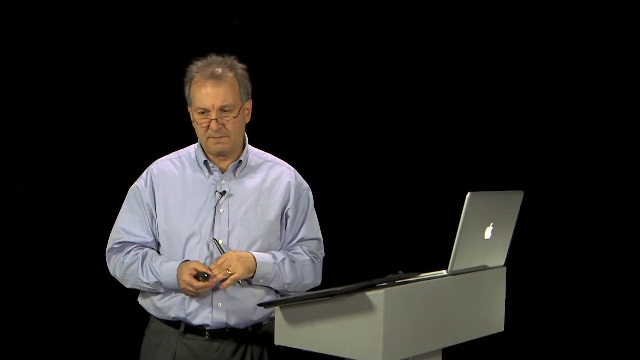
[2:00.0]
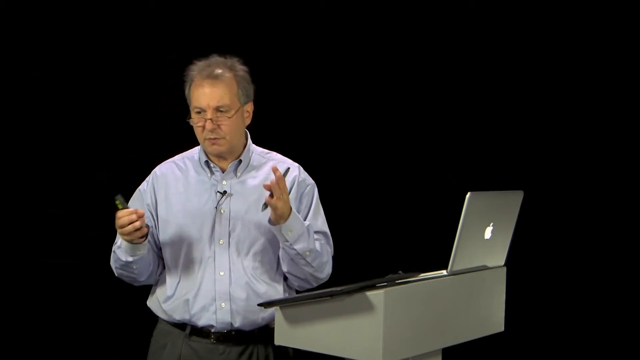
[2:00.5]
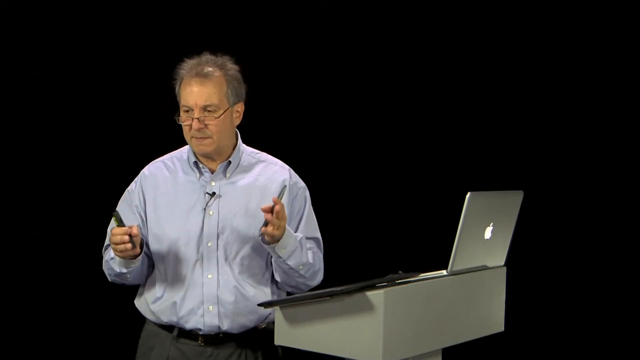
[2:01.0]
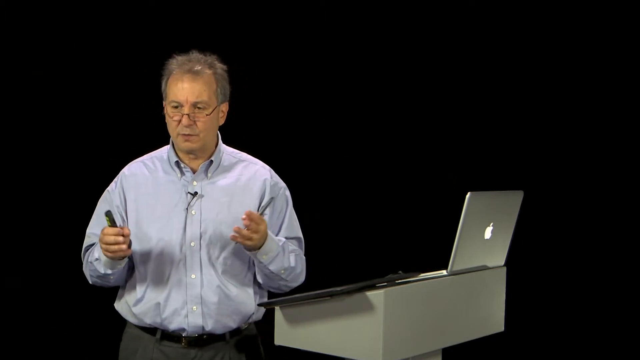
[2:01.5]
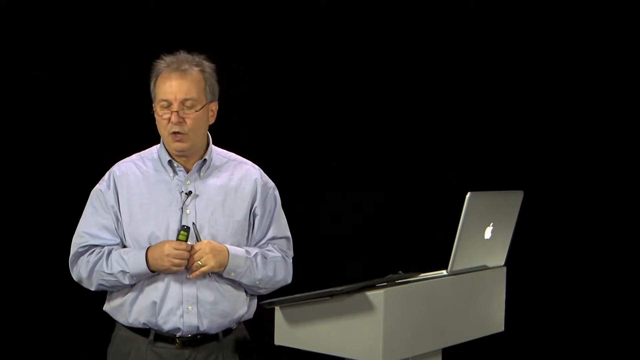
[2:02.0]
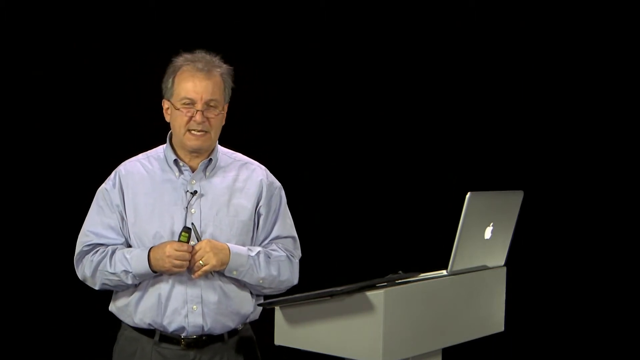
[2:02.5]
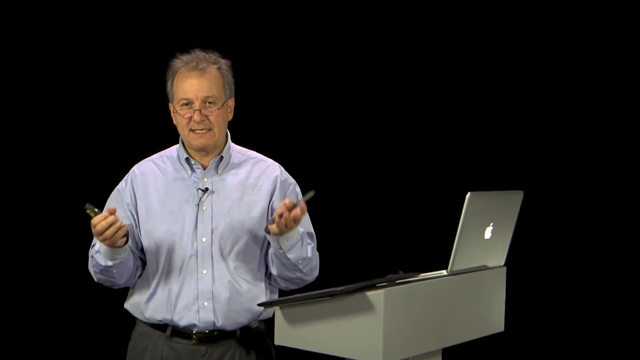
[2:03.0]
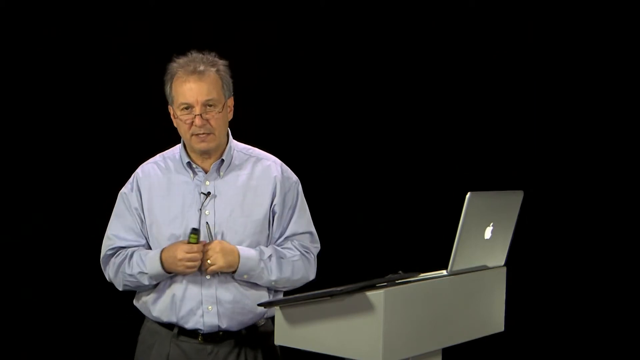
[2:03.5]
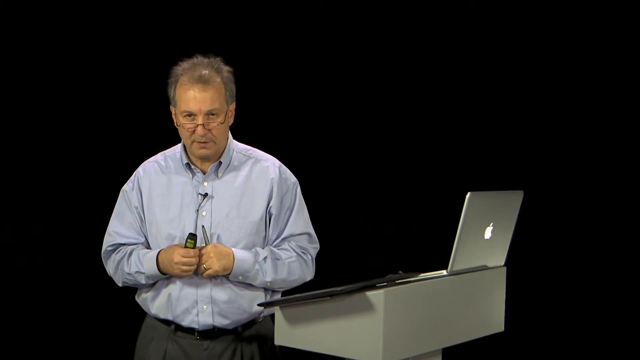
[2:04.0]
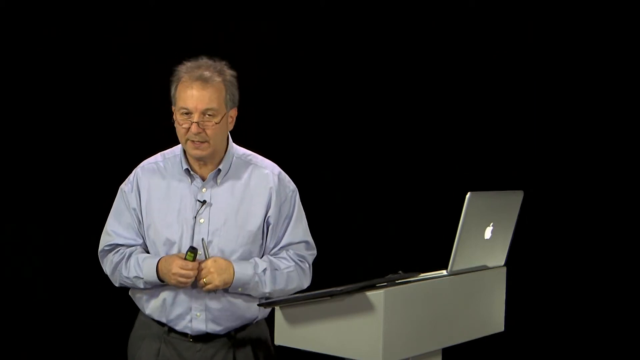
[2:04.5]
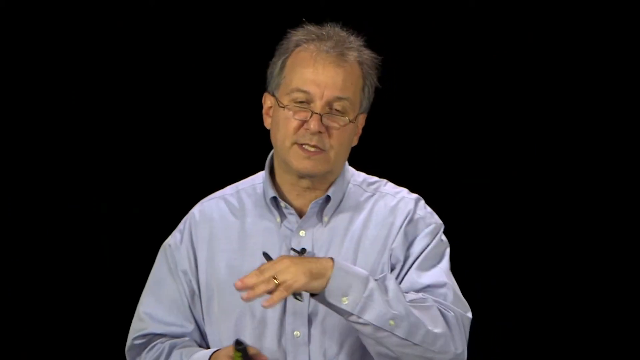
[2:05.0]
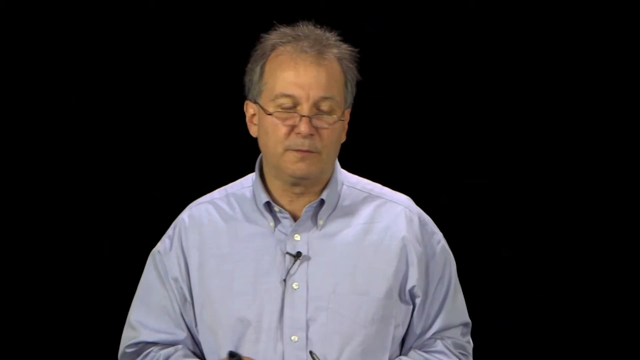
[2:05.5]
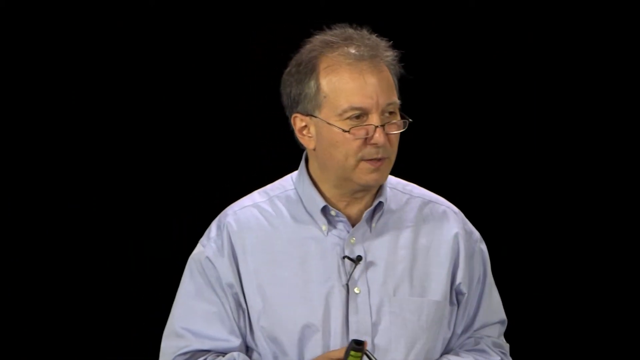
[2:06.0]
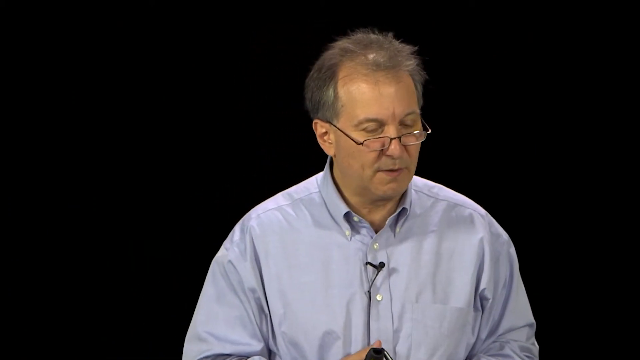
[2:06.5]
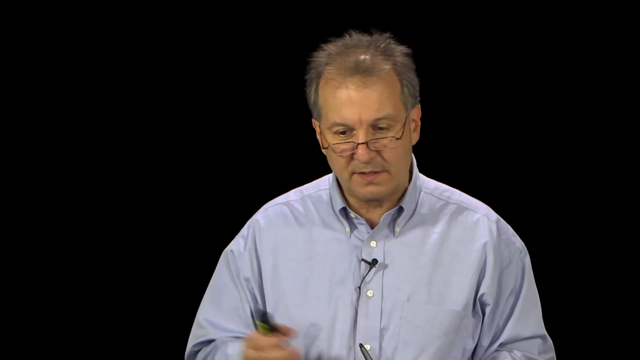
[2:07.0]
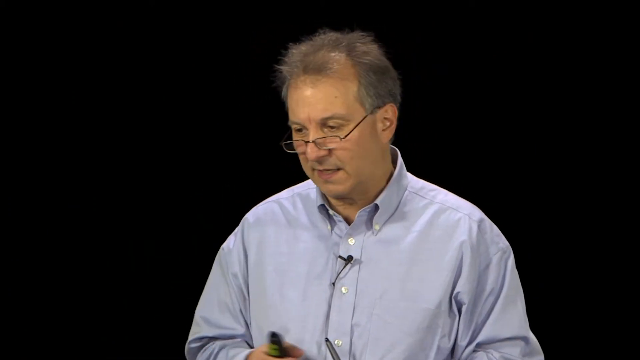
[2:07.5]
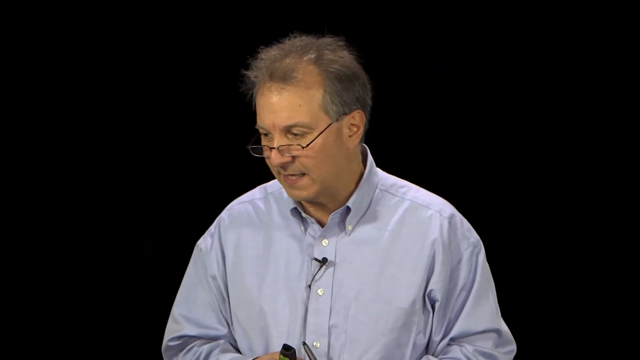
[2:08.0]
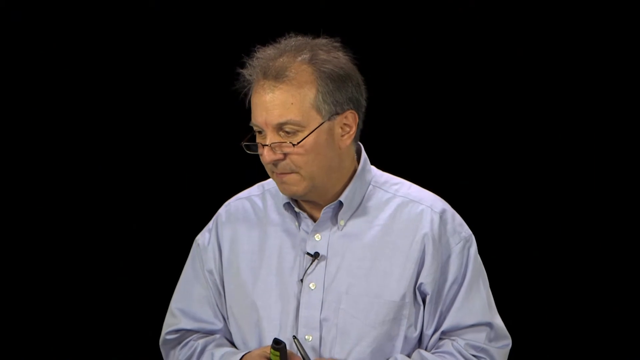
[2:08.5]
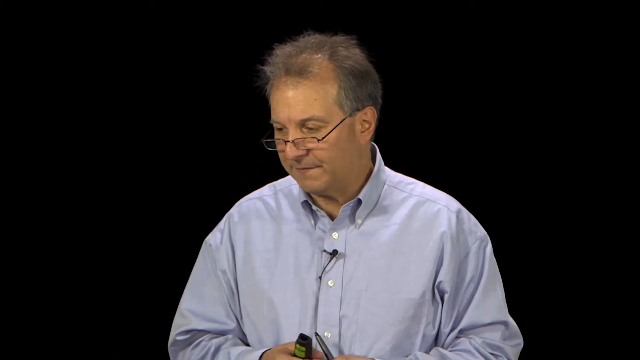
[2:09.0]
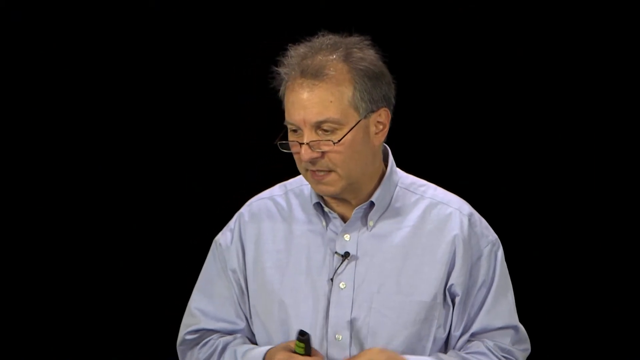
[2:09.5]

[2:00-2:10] The man, wearing glasses and a light blue polo shirt, talks directly to the audience. A computer on the screen is right next to him, and the background is black.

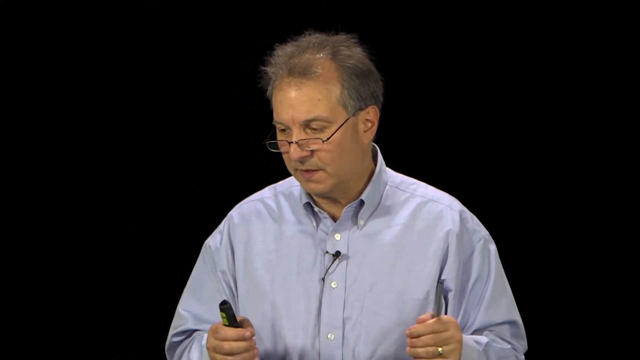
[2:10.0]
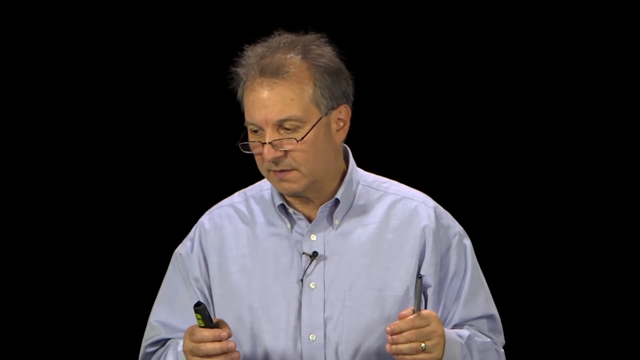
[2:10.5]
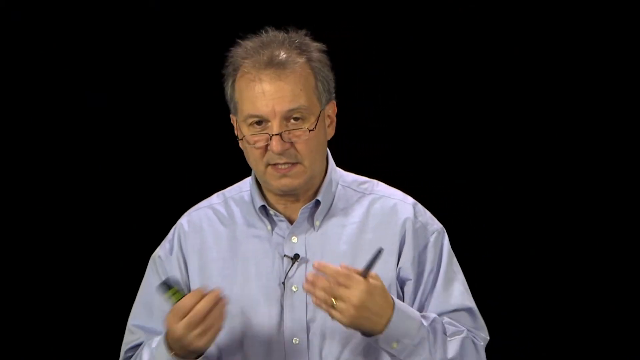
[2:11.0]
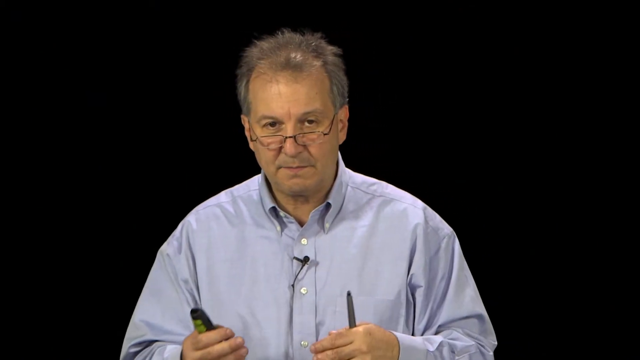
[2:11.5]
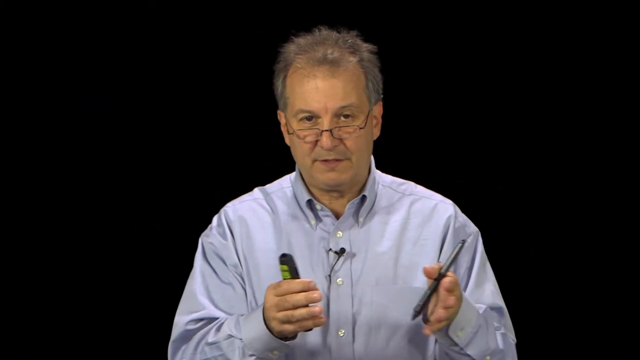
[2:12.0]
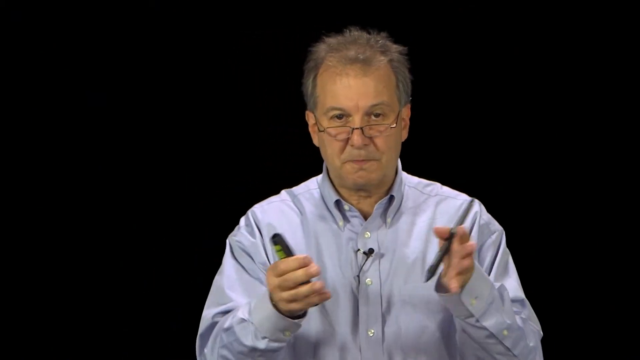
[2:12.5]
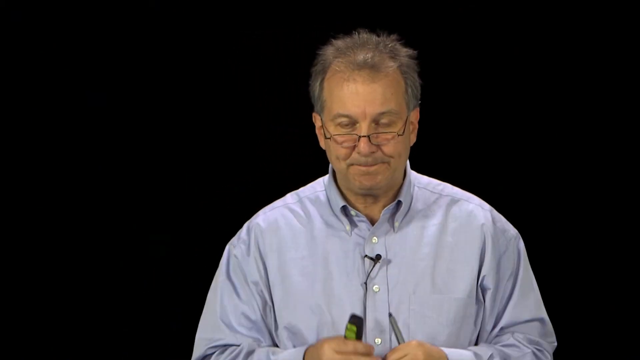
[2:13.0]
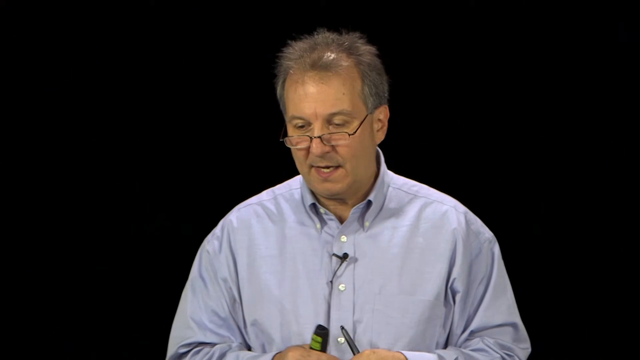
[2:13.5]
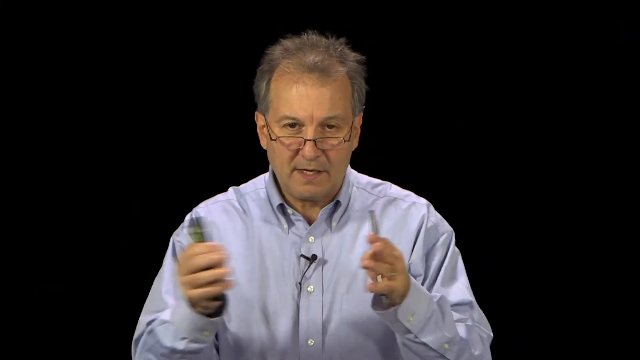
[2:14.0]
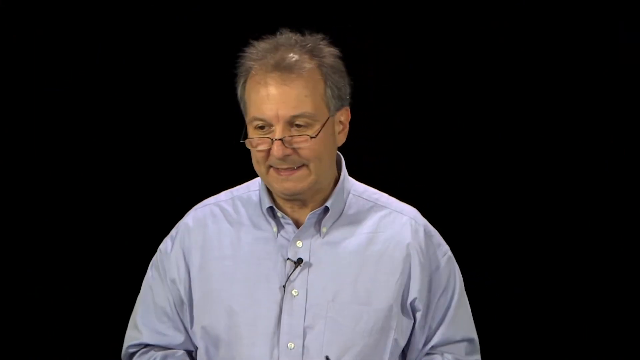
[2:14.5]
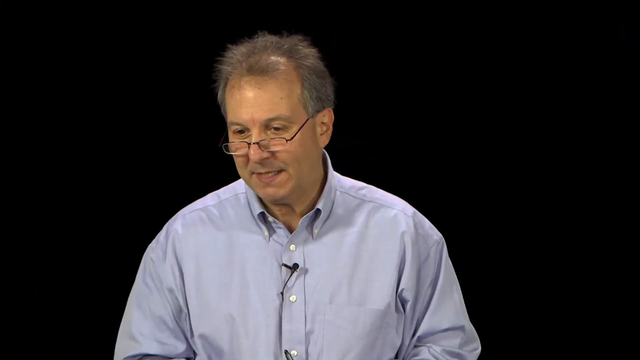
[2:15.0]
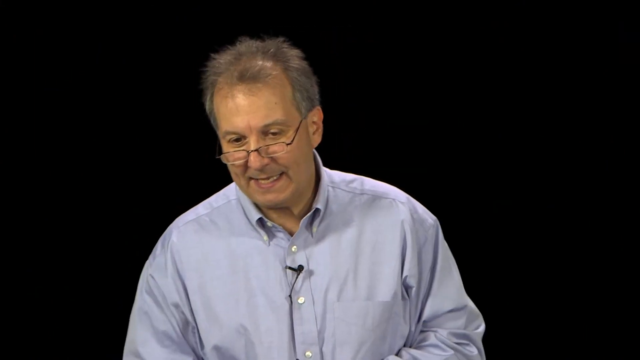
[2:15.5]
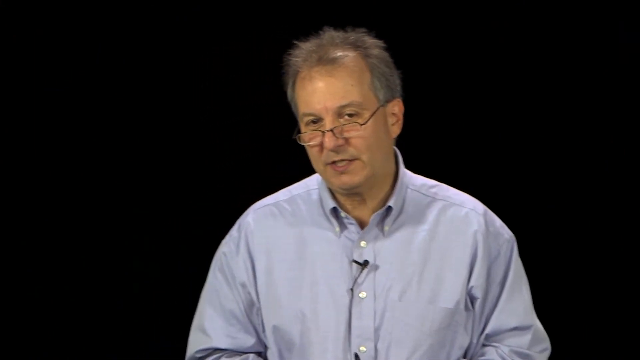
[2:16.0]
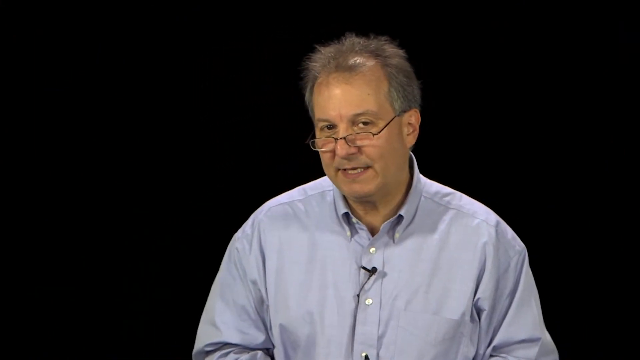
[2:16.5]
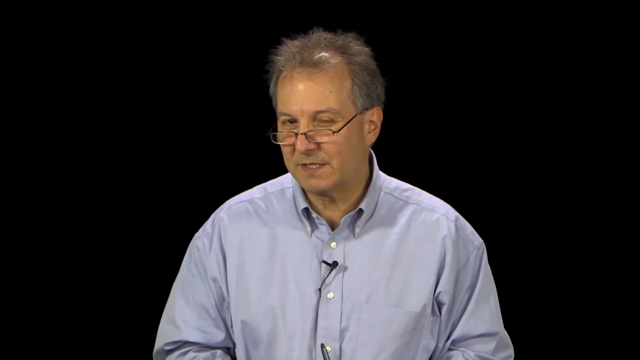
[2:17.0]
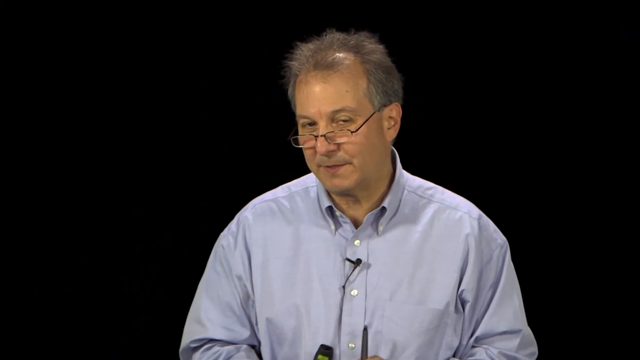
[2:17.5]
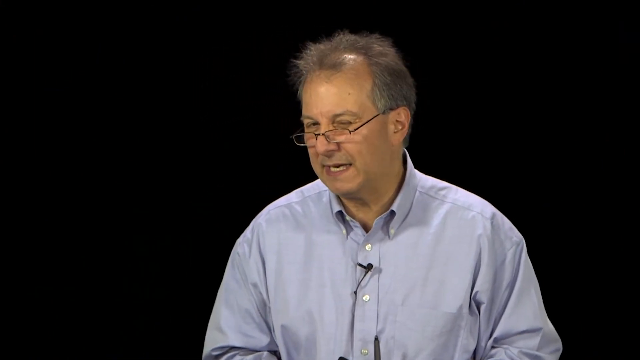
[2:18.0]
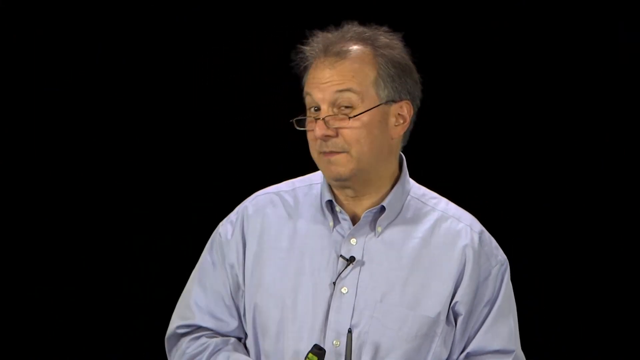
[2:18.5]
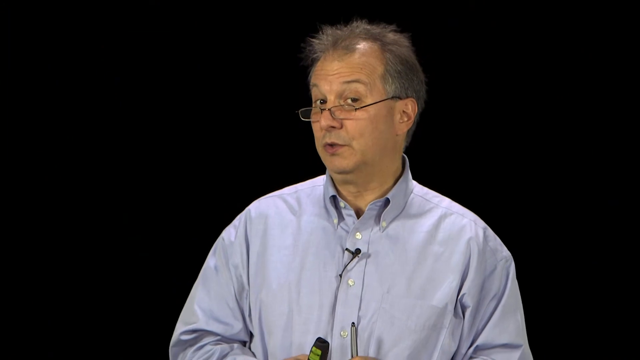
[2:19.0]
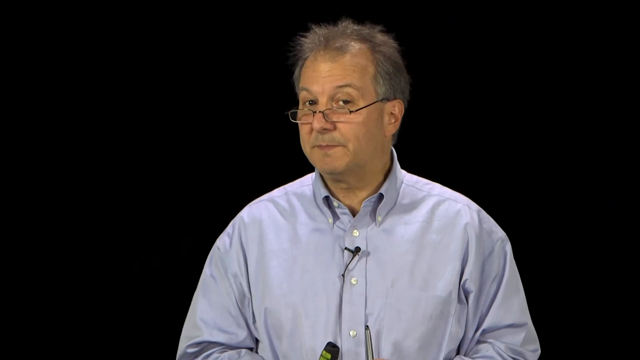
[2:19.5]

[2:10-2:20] The man is in the forefront, speaking, against a completely black background.